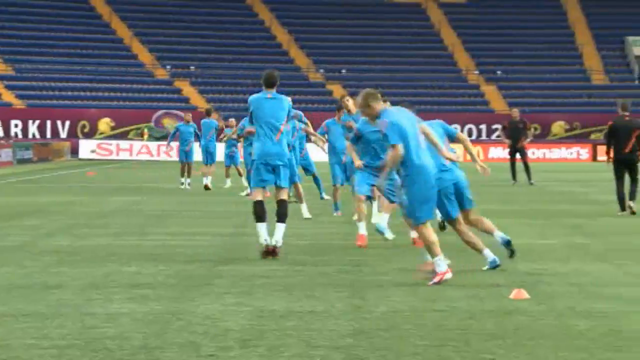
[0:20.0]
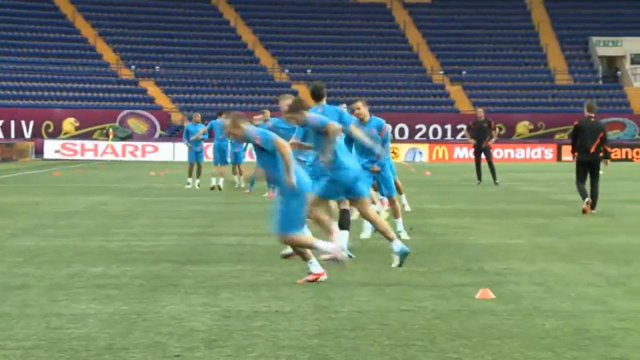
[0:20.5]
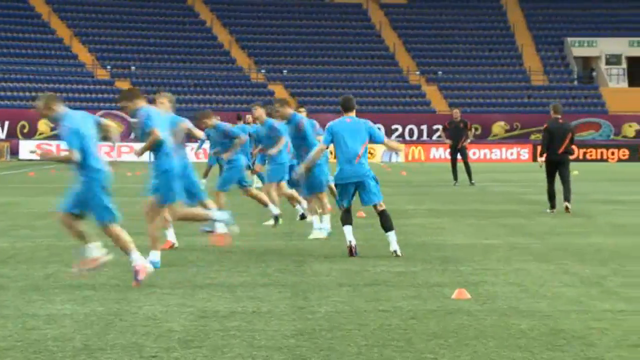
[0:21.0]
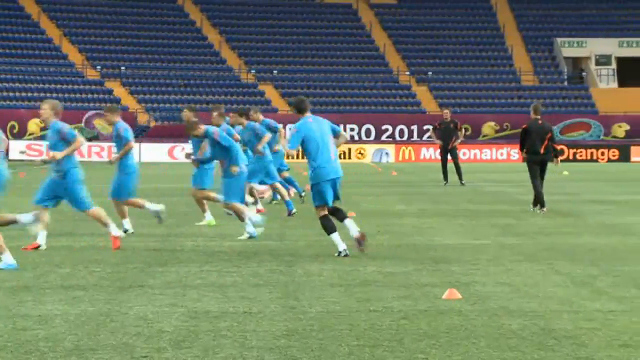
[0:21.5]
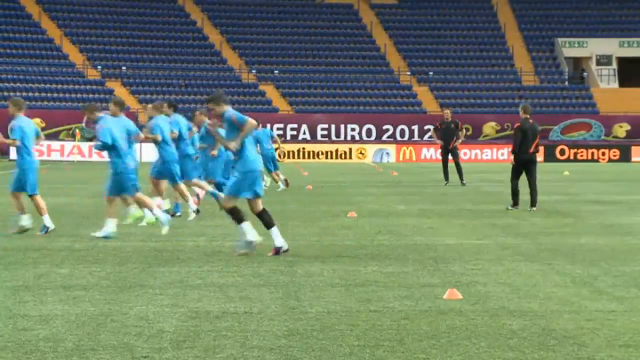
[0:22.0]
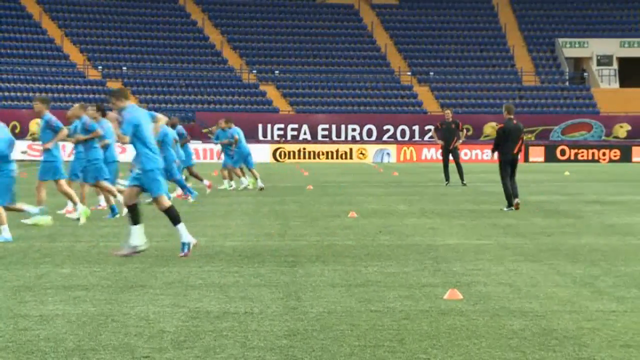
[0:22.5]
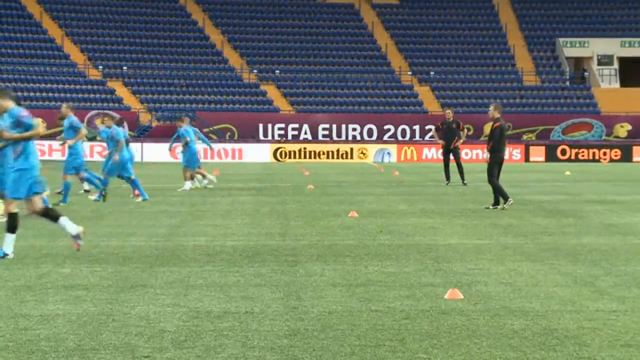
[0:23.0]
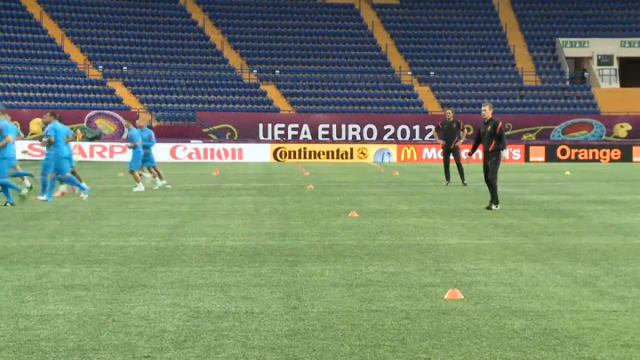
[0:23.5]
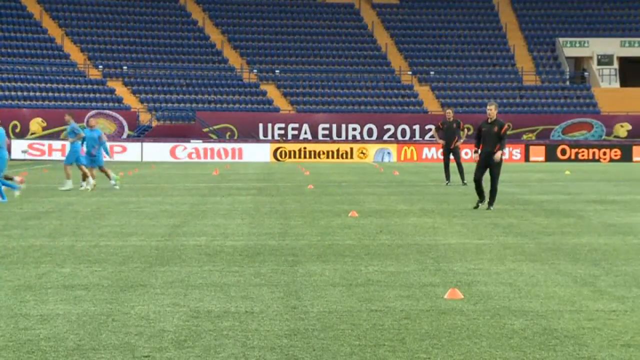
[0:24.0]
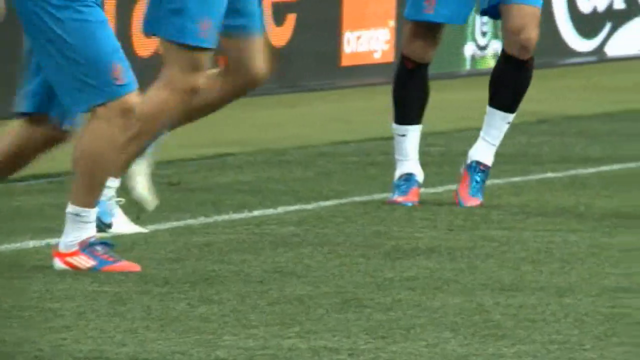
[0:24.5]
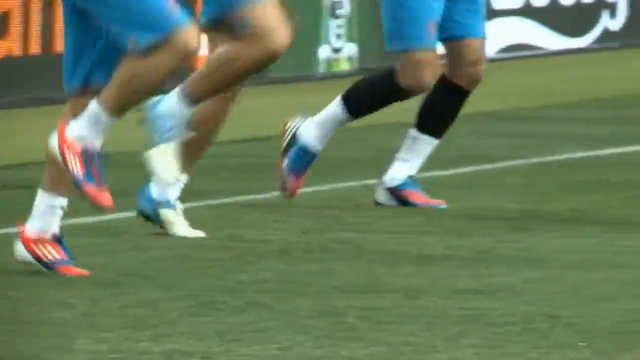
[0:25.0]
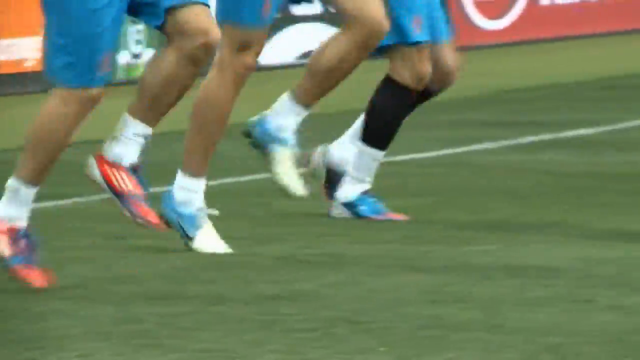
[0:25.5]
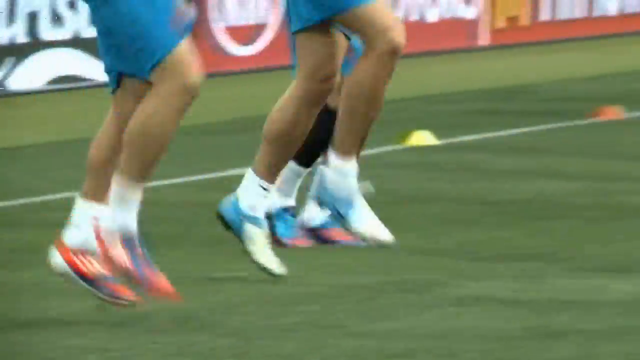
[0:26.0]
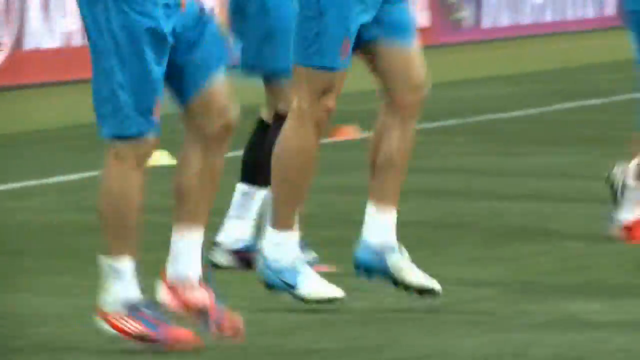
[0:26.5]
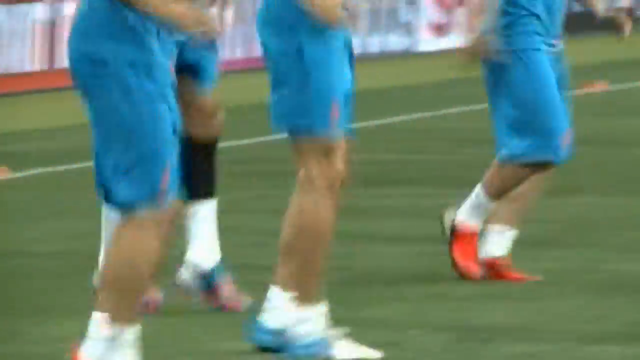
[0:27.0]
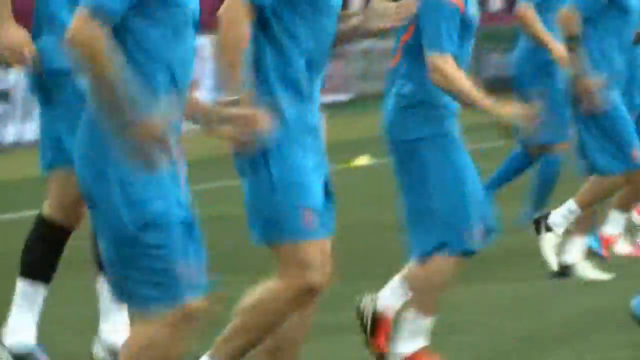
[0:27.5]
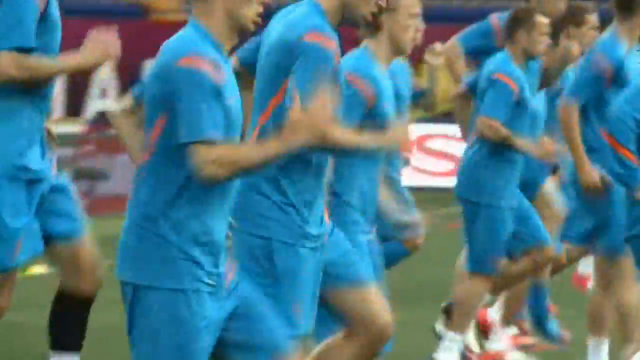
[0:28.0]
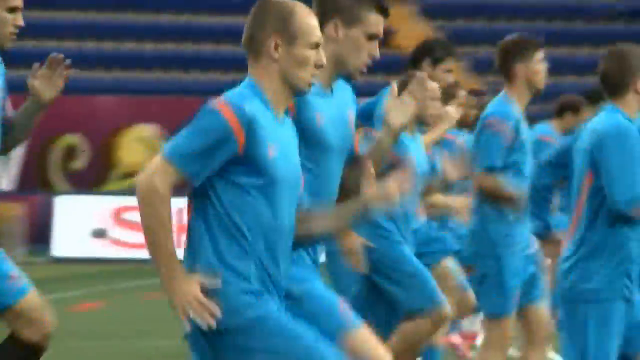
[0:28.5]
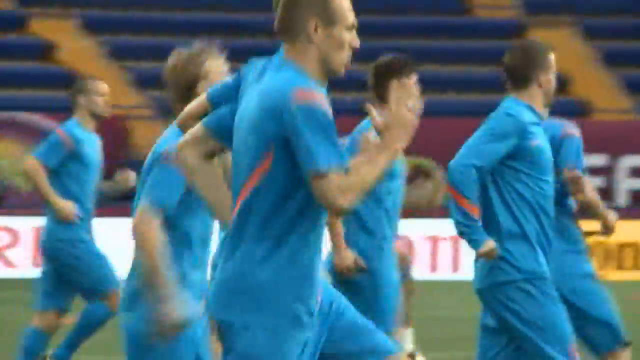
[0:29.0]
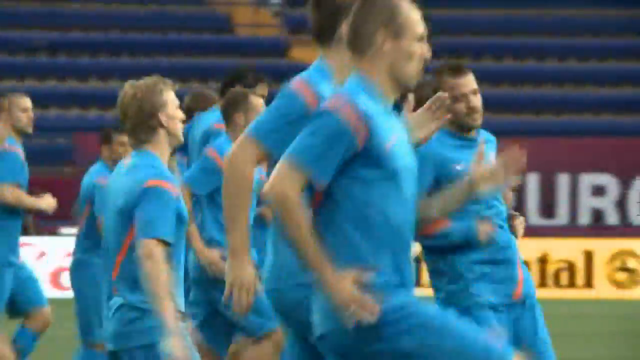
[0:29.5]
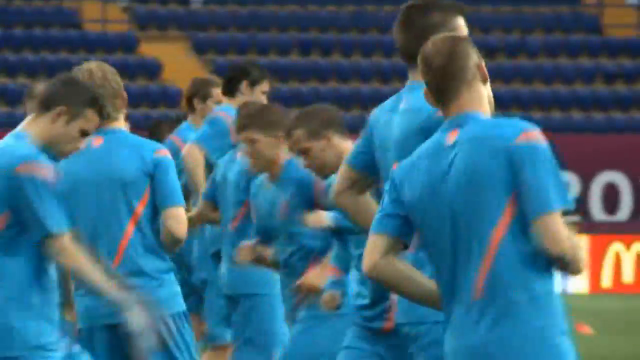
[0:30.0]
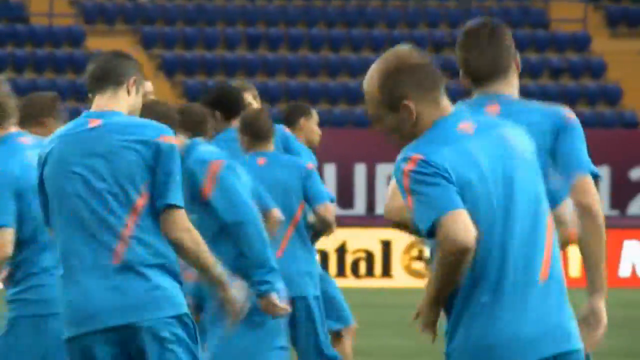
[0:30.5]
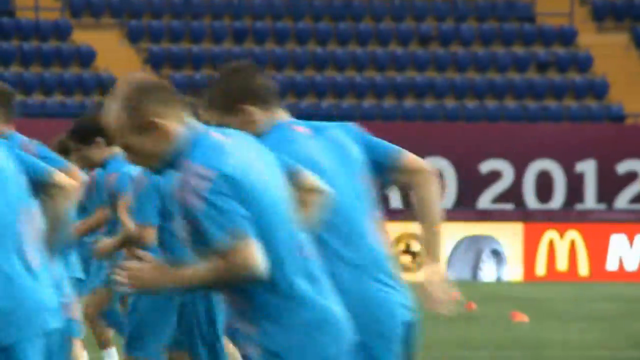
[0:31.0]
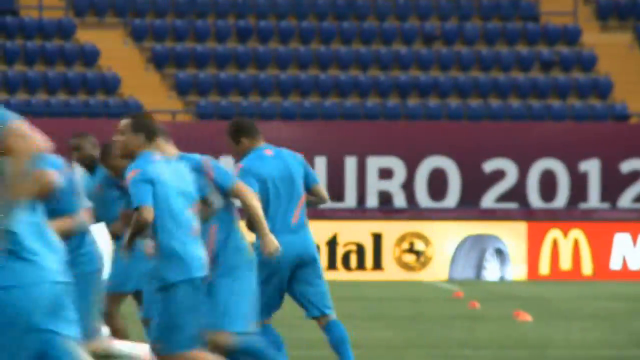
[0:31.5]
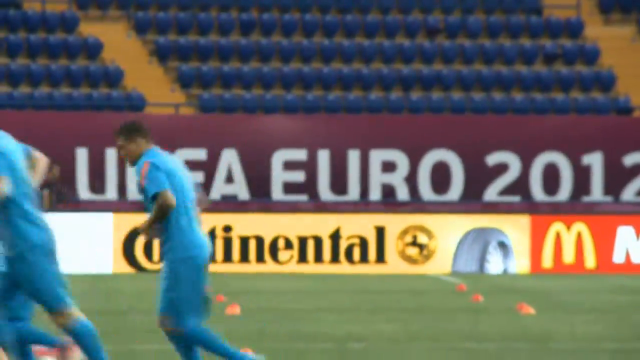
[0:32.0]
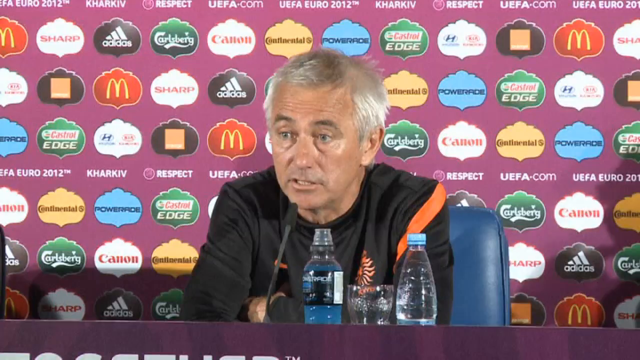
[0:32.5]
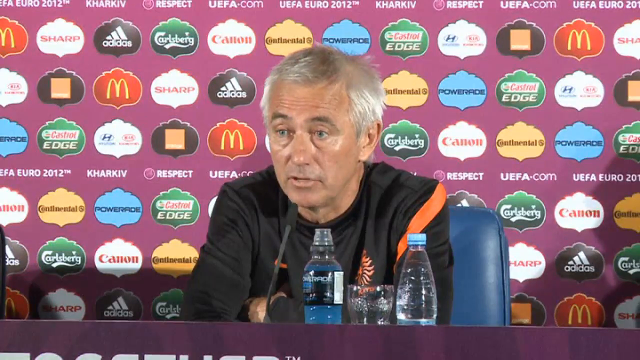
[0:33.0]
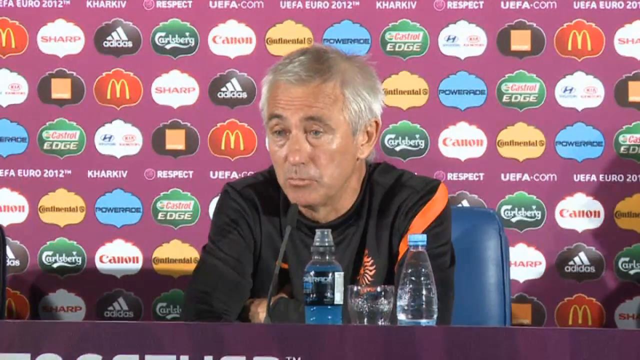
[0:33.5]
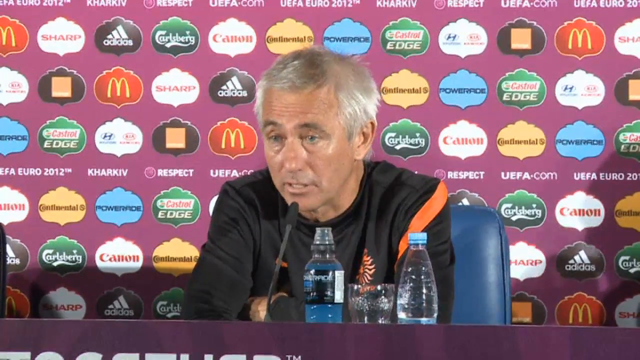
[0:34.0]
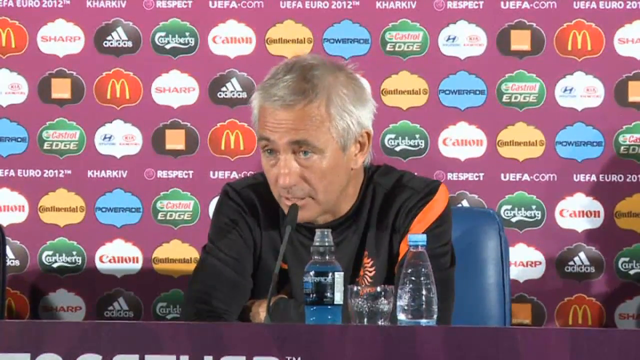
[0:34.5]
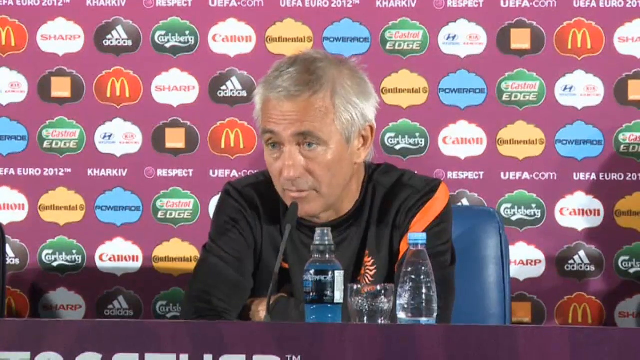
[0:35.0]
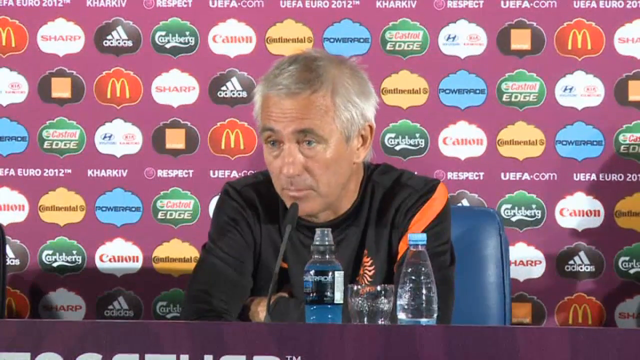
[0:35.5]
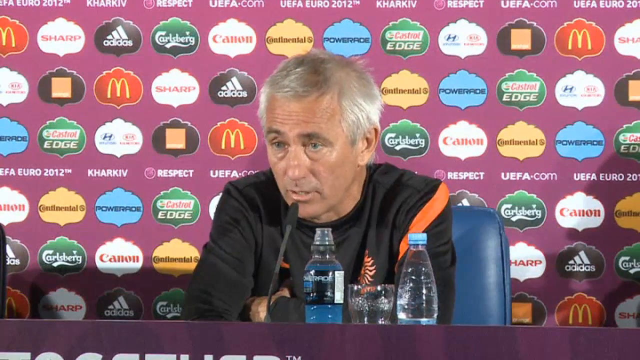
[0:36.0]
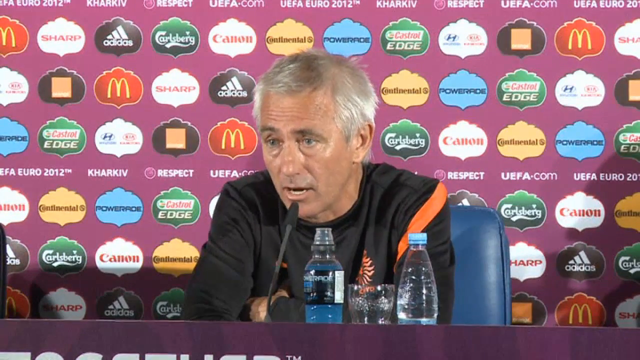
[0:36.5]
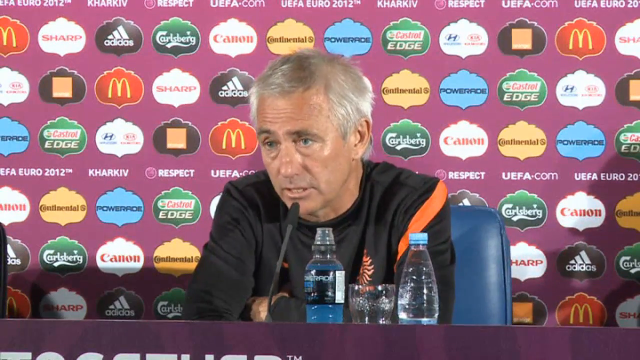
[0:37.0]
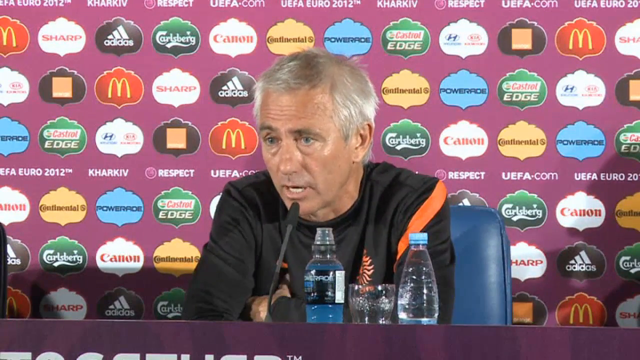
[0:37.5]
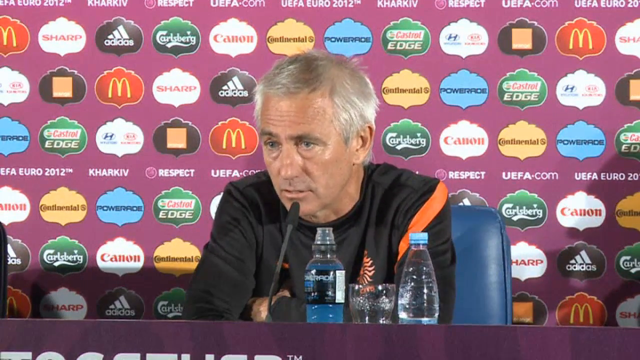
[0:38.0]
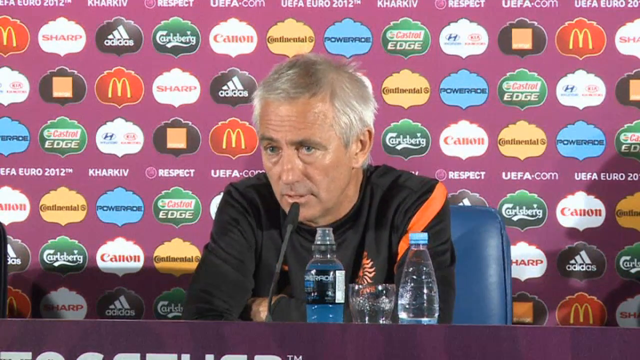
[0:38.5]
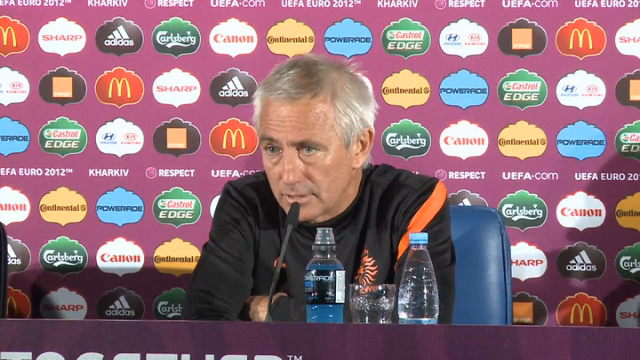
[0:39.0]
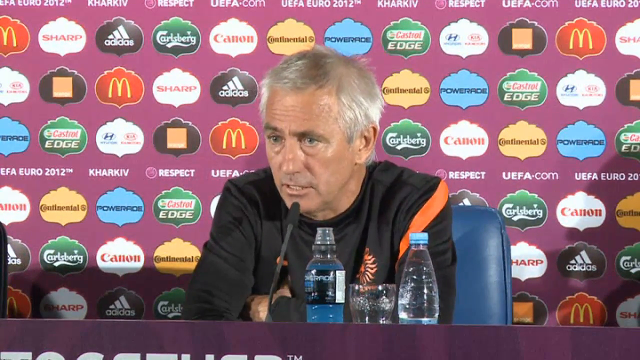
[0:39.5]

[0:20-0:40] Half of the team jogs across the field while the others finish hopping from side to side and swinging their arms, then also jog back. A close-up shows their legs hopping, and then all of them hop gently as they swing their arms before turning around and jogging back. The video cuts to an older man with silver hair, arms crossed, in a black jersey with an orange stripe, sitting at a table with a microphone and bottles of water, with sponsorship logos behind him. He looks like the coach. With a concerned look on his face, he talks to somebody in the center of the room. With his arms crossed, his left thumb fidgets a little, and he gives a very slight shrug and a little head shake. He lifts his head, straightens up just slightly, shakes his head and fidgets his thumb again.